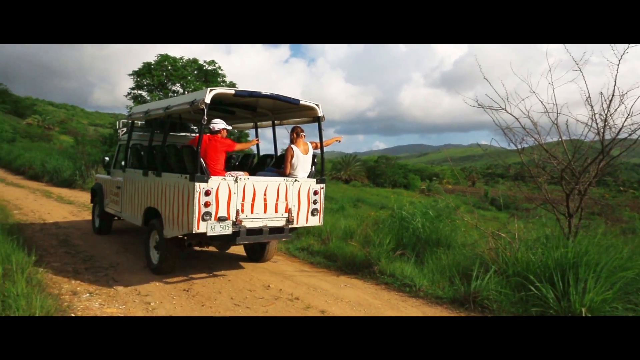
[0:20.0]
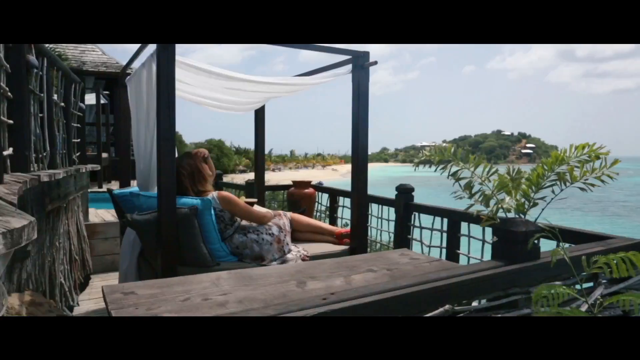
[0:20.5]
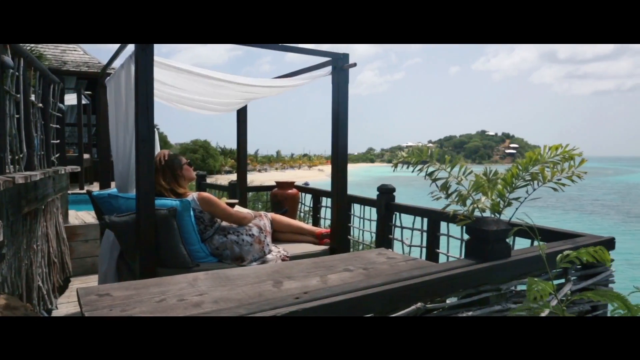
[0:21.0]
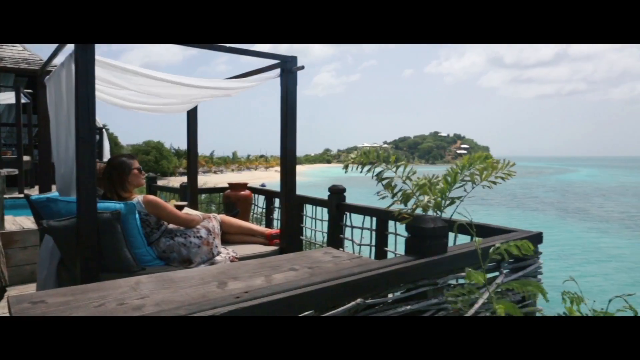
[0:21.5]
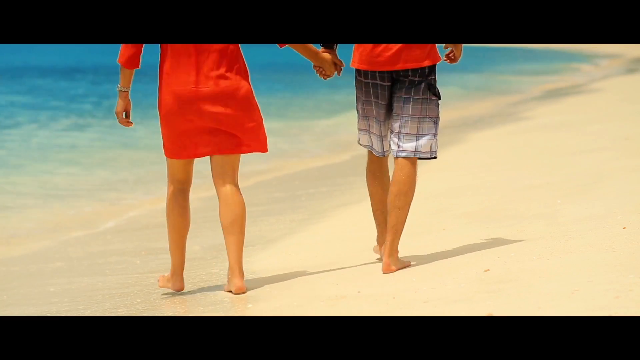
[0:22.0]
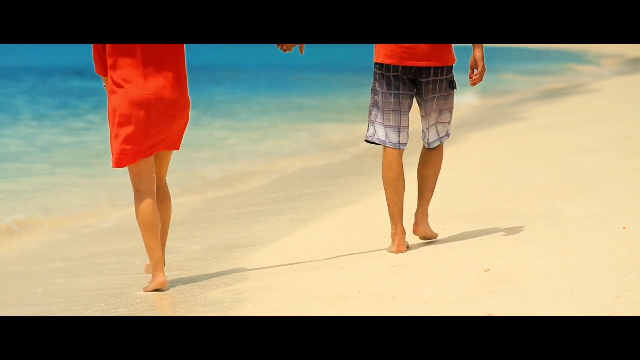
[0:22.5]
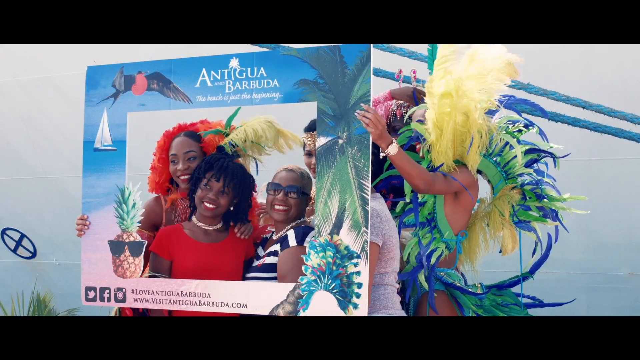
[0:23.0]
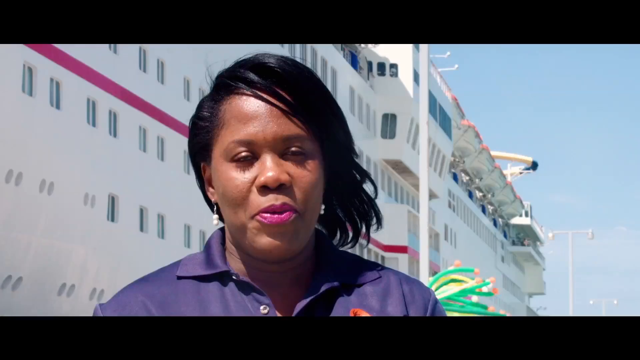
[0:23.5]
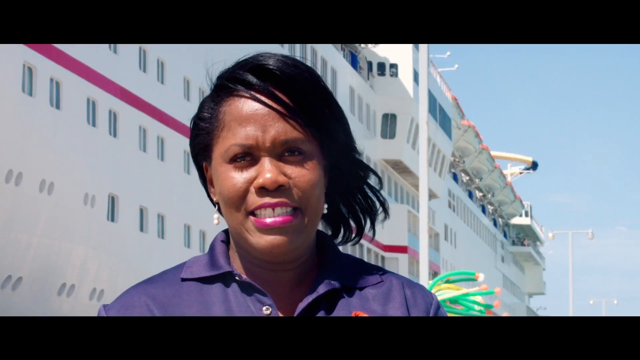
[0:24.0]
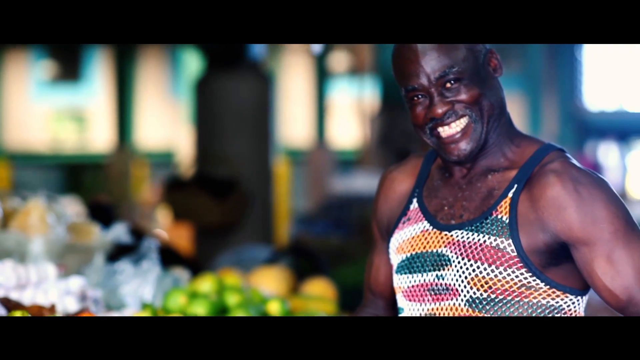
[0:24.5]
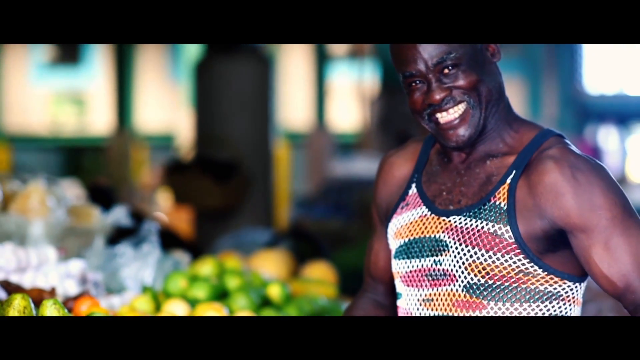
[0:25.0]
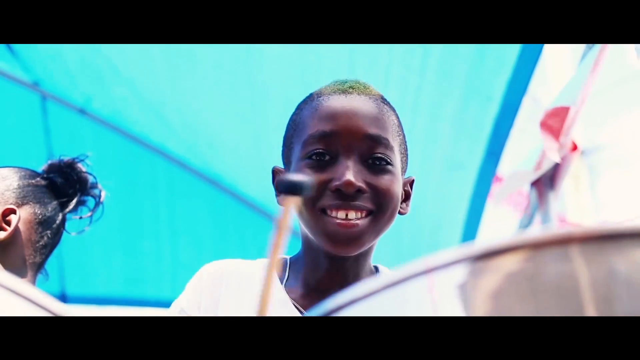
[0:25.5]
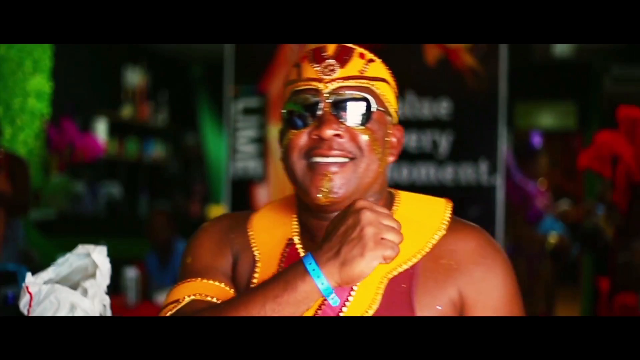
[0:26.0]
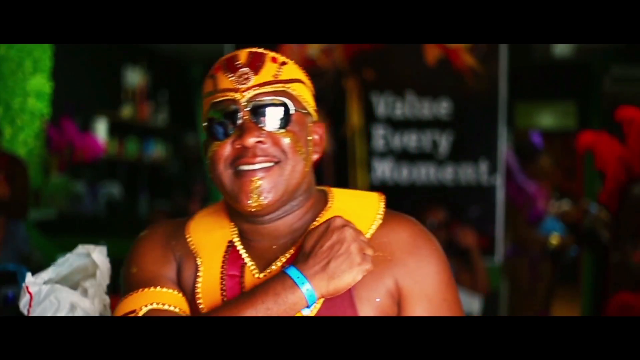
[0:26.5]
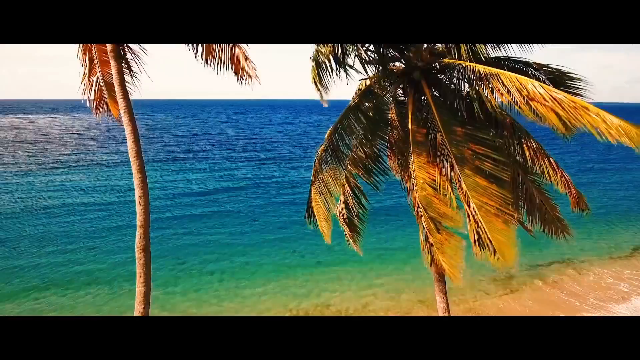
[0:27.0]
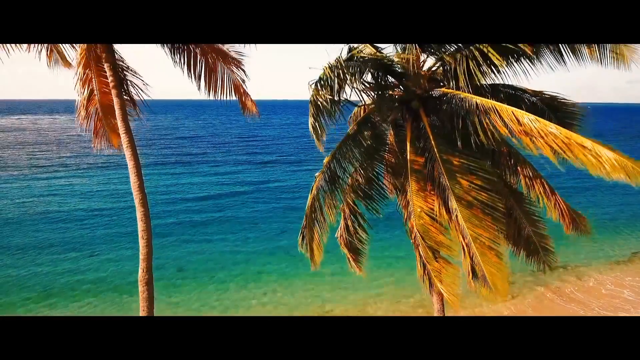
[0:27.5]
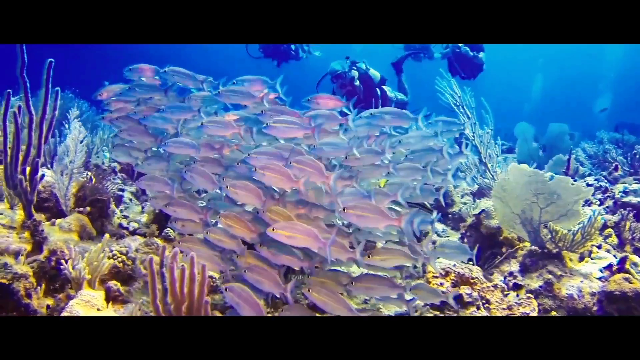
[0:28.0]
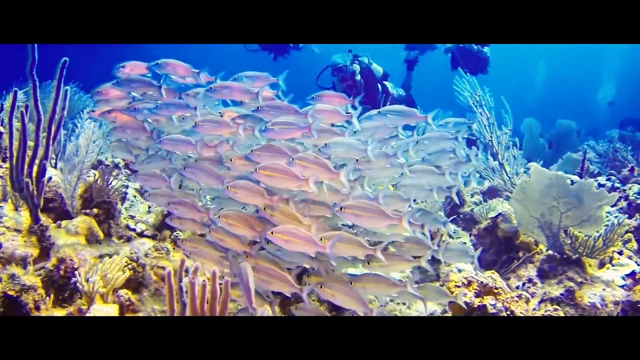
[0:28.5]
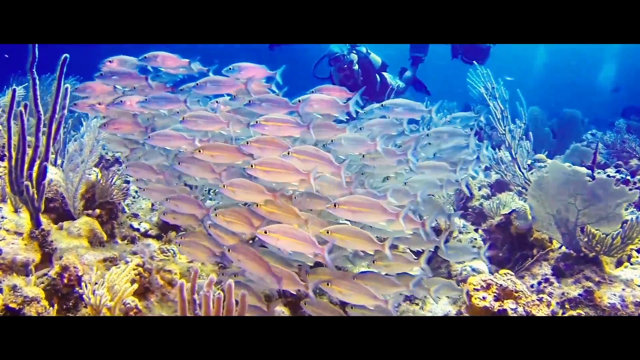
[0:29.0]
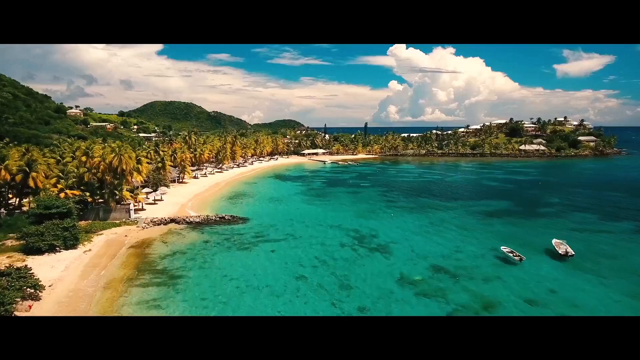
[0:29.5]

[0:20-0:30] Several people ride in an open jeep-like truck with seats in the back and a shelter on top to protect from the sun. A man in a white shirt and white hat points off to the right, and a man in the back wearing a white tank top also points off to the right. The truck has red and white stripes, with a white background. Someone sits on a porch under a little awning, relaxing and looking out over the blue water, the ocean and the bay. Two people walk on the beach: a female on the left in a dress, and a male on the right in black checkered pants and a white shirt. People take pictures on the beach. A black woman in a purple shirt and pink lipstick stands next to a cruise liner with lots of ports and windows, talking to the camera. A black man in a multicolored tank top smiles for the camera, showing all his teeth. A little black kid plays the drums and smiles at the camera, which is down low looking up at him. A strong, muscular, dark-skinned man wears yellow leather items, as if he is one of the indigenous people of the area, along with sunglasses and a yellow and red leather wrap around his head. Then the ocean, a palm tree, and a school of fish underwater appear.